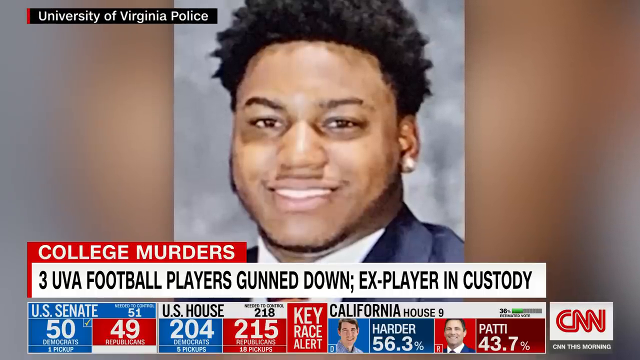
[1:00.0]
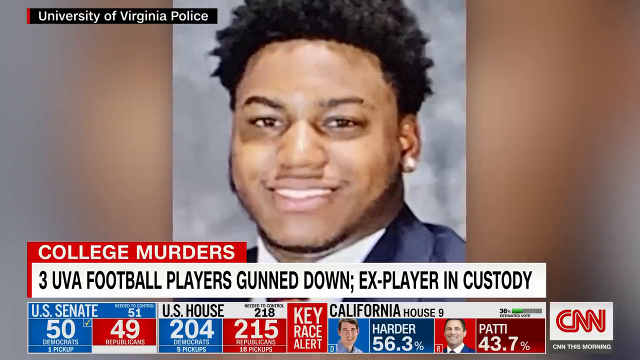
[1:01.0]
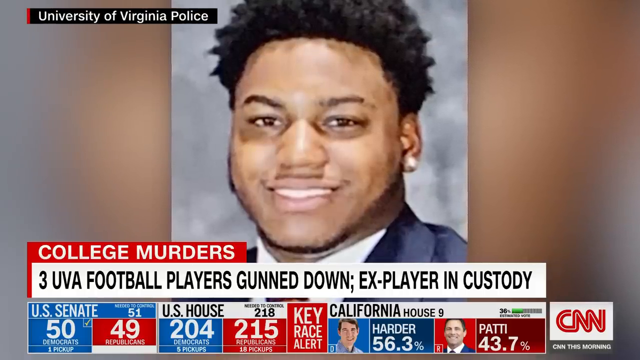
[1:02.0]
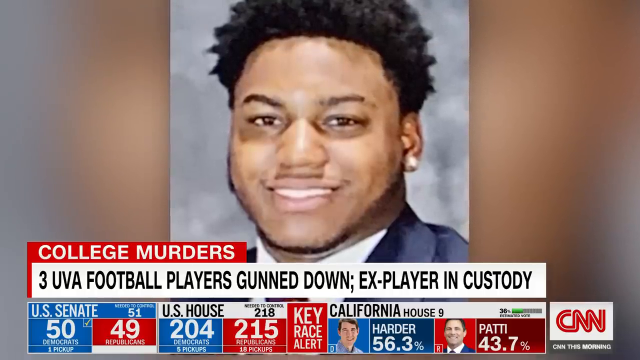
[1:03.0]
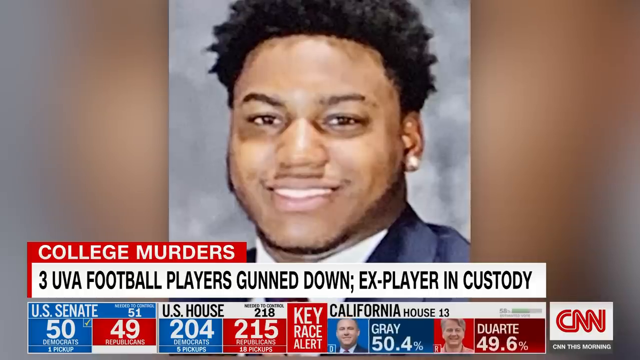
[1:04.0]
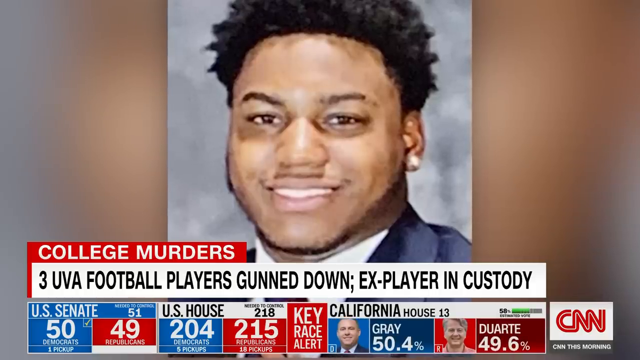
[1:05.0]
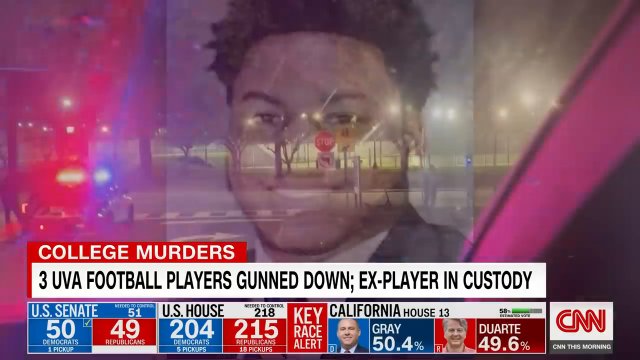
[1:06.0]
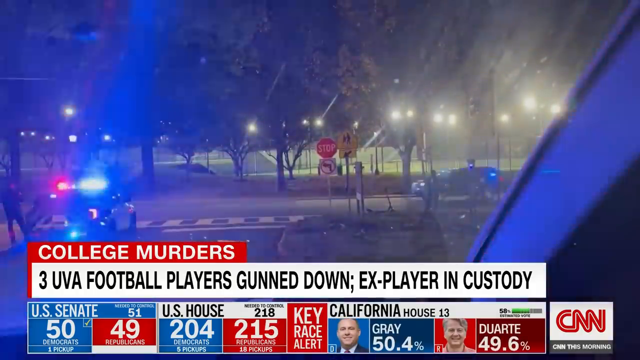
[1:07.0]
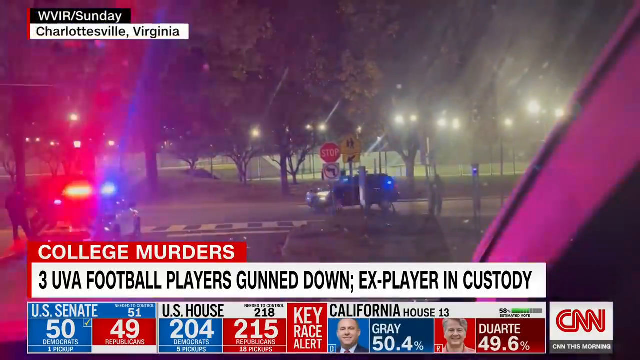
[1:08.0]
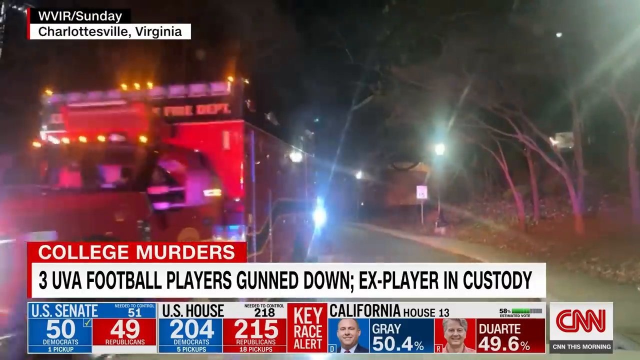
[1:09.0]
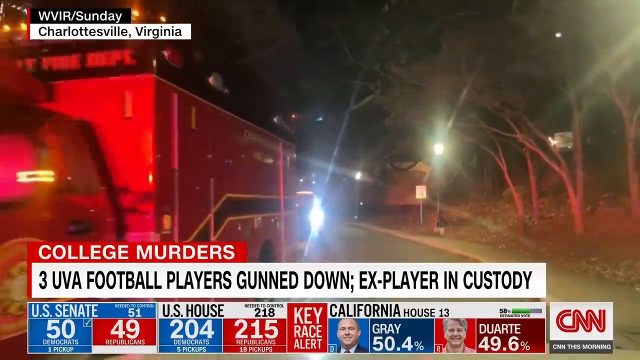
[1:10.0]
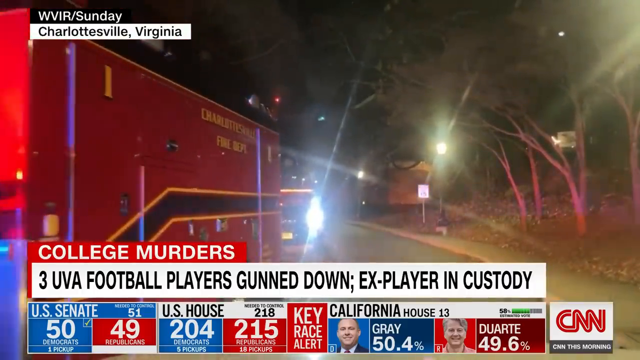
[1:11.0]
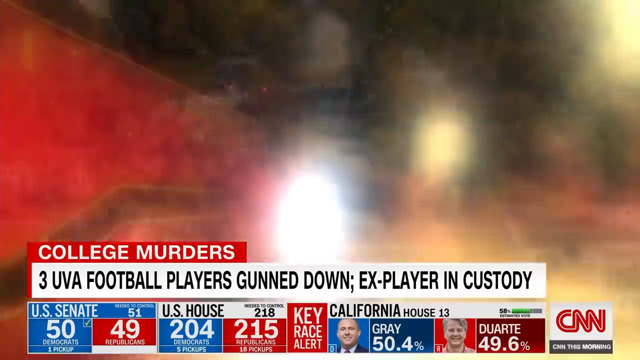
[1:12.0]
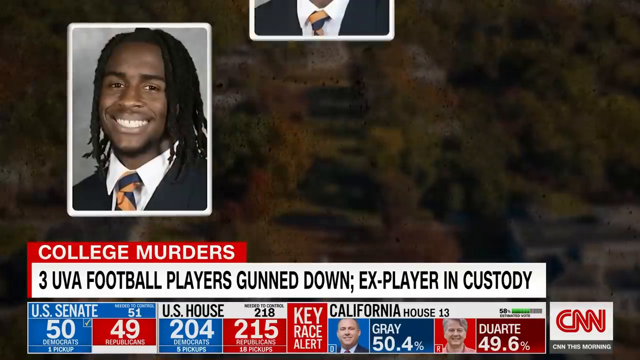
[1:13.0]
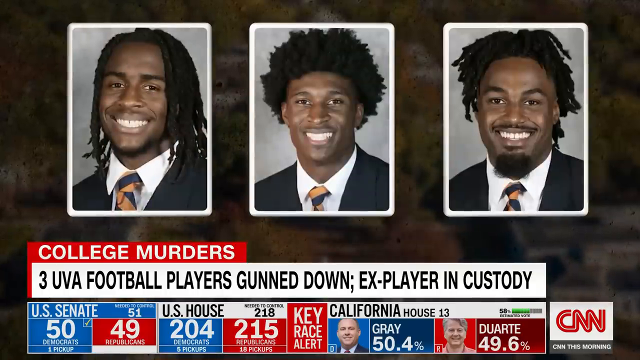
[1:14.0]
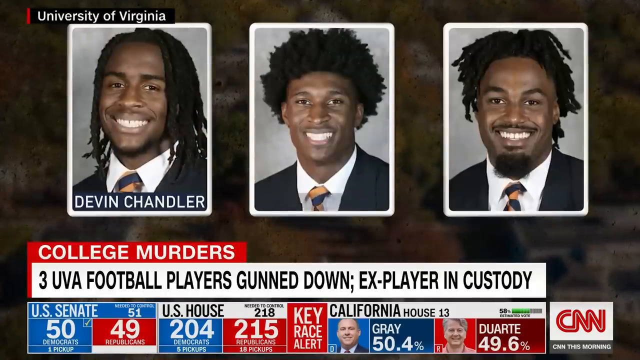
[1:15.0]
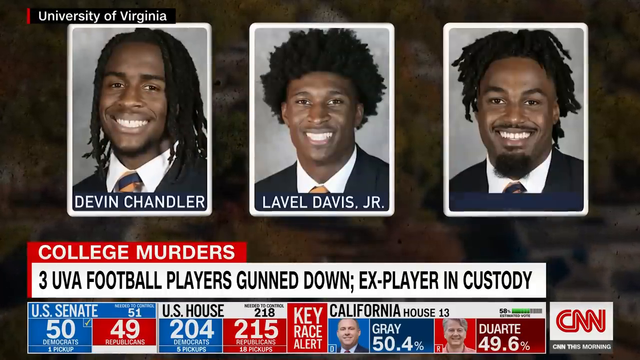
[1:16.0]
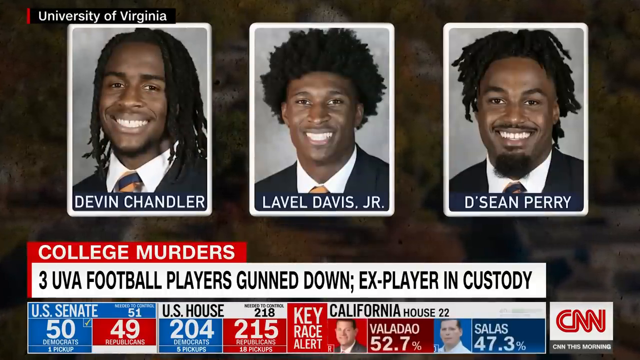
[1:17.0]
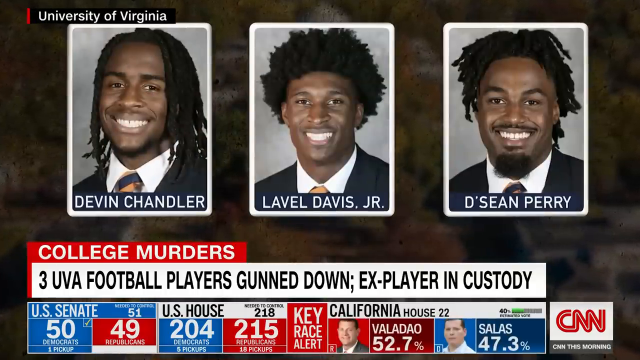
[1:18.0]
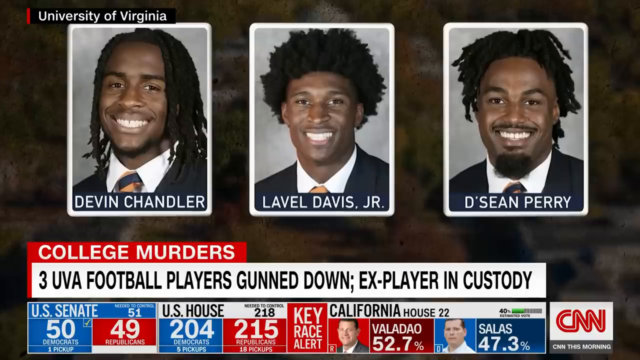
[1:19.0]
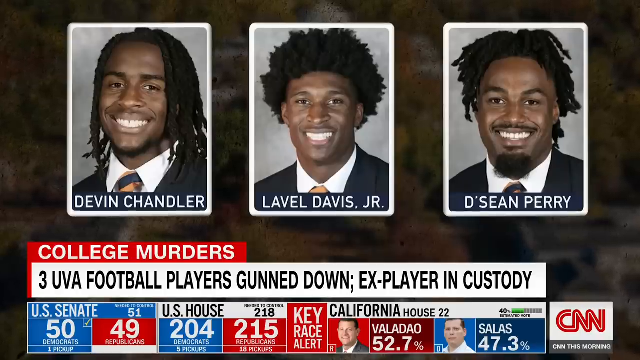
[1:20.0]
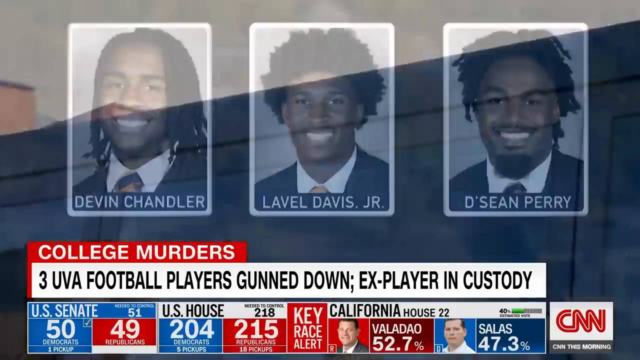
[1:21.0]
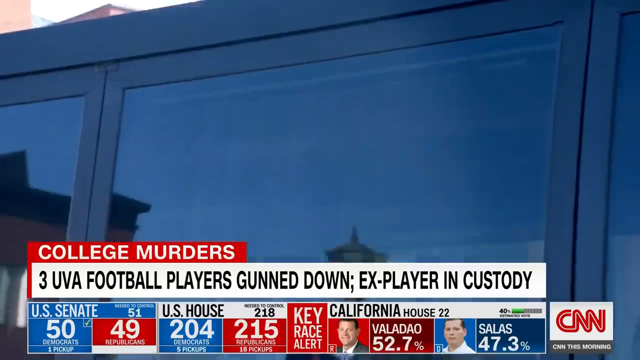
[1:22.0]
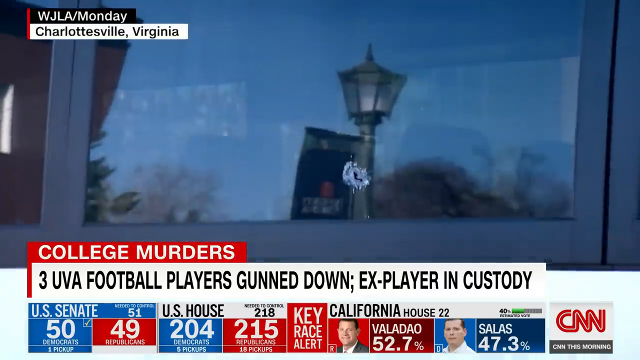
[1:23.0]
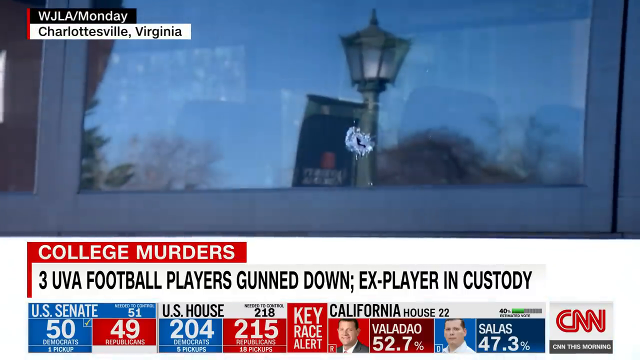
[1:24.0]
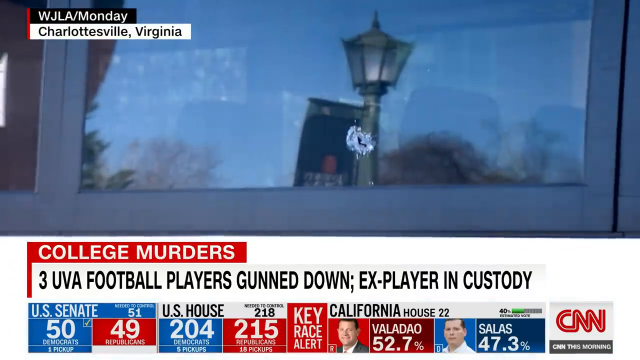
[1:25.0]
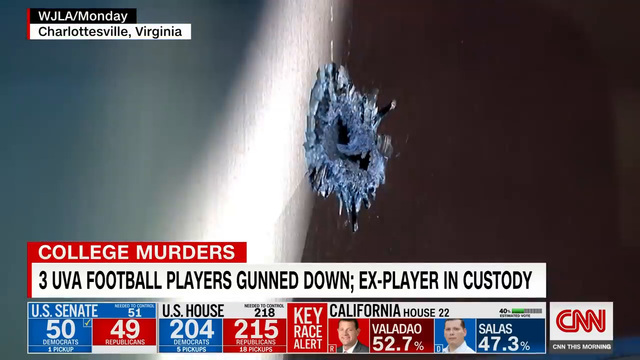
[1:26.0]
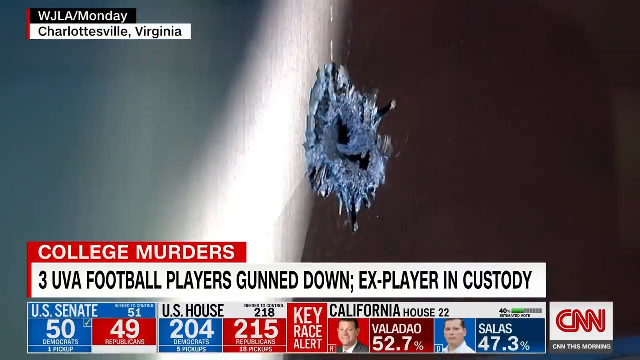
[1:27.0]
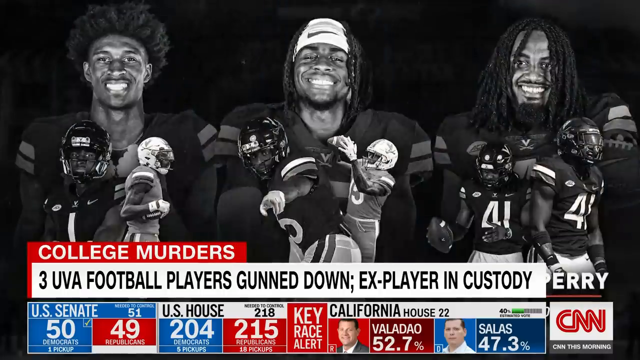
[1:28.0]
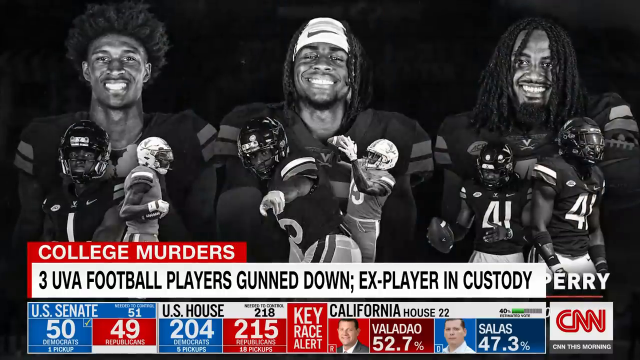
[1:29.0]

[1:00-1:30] The CNN story titled "College Murders" shows a photograph of an African American man in a suit, smiling and appearing to wear an earring. Other footage shows police cars driving along the private roads of a college campus, with a row of trees and, beyond that, a large green field with the stadium lights turned on. One police car is parked on the left of the screen with a police officer standing guard, and the red and blue lights on top of the police car are flashing while a large black SUV drives along the driveway. Fire trucks also drive along the college roads. Then photos of three young African American men are shown on the same screen; they appear to be the victims of the shooting, and the banner reads "Three UVA football players gunned down, ex-player in custody." The earlier photo of the single man might be of the gunman. The three are all dressed in black suits with white shirts and the same blue and yellow tie, and they appear to be smiling.